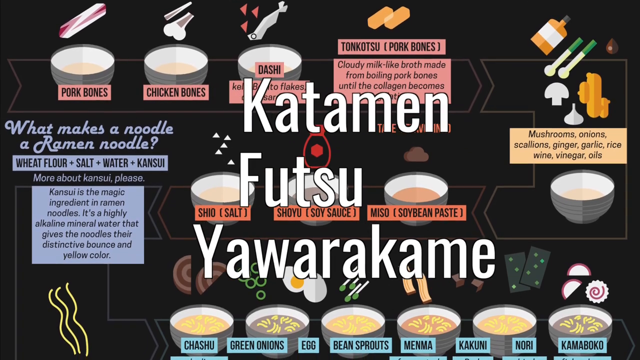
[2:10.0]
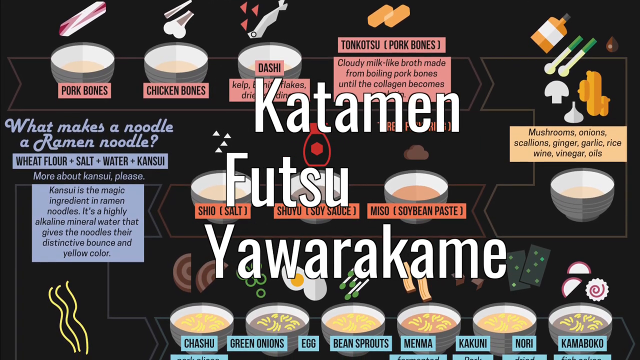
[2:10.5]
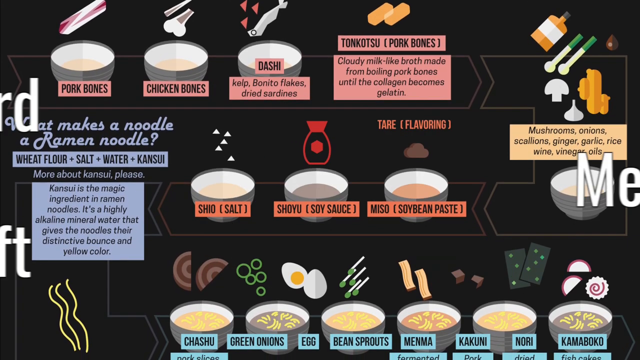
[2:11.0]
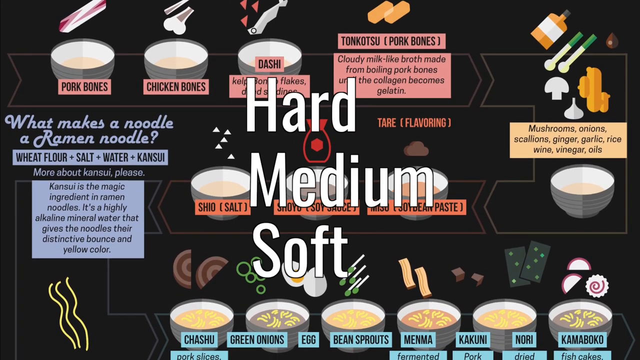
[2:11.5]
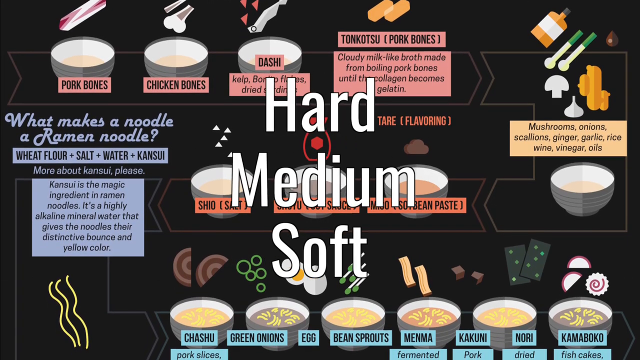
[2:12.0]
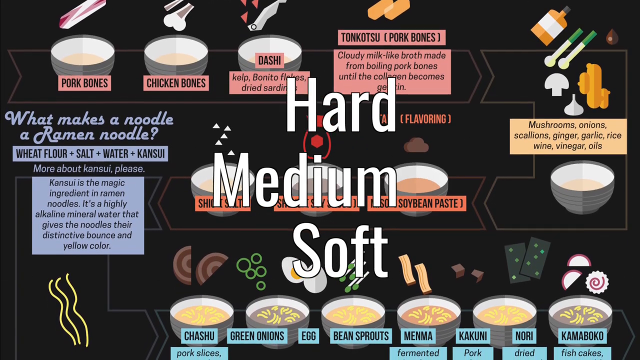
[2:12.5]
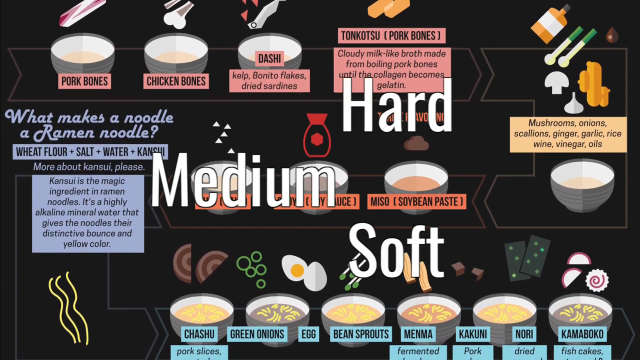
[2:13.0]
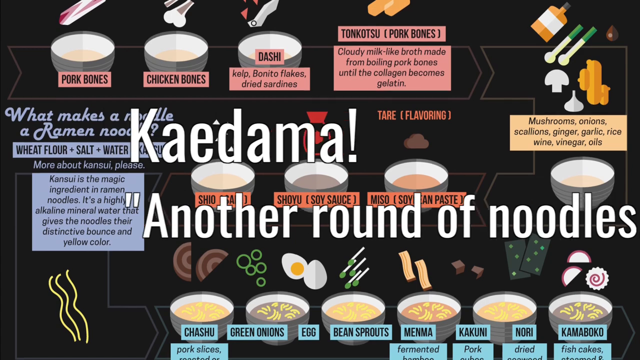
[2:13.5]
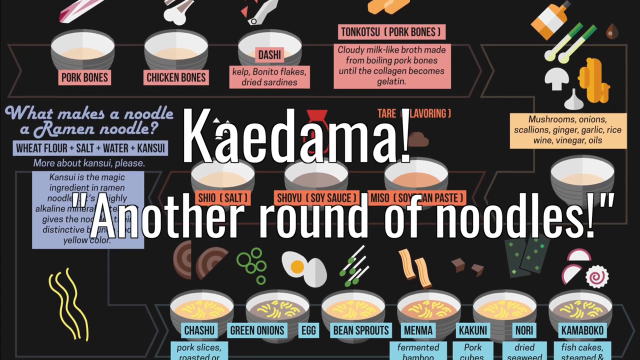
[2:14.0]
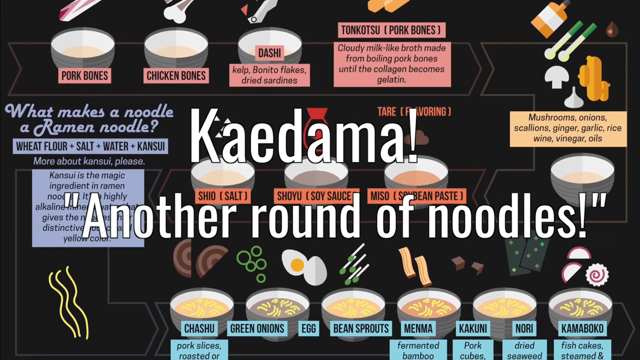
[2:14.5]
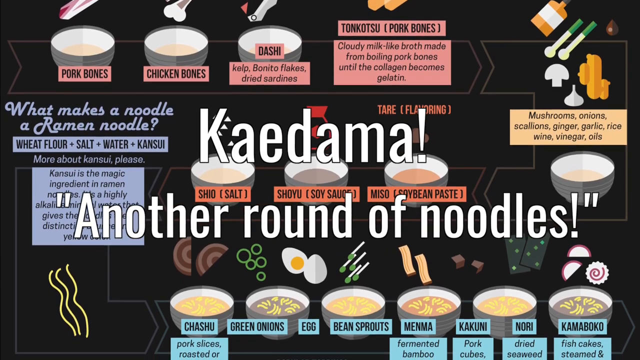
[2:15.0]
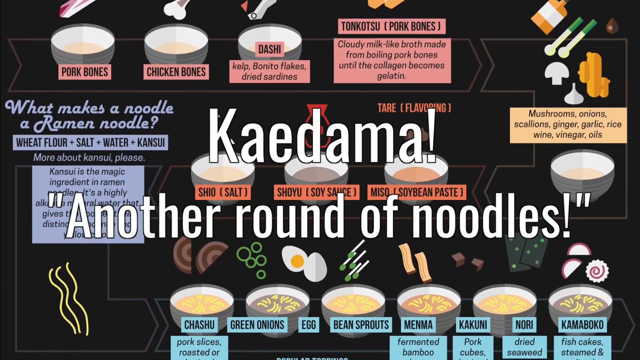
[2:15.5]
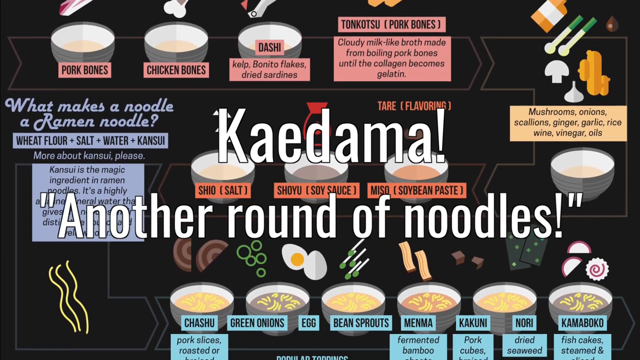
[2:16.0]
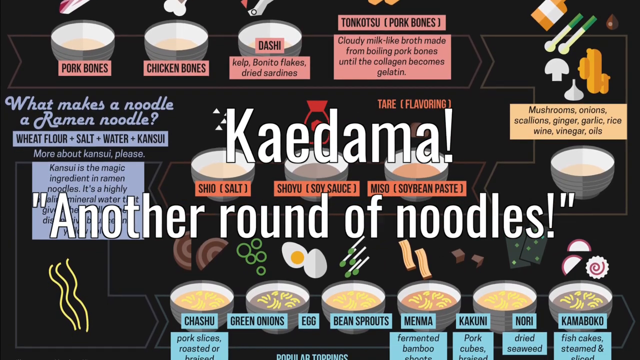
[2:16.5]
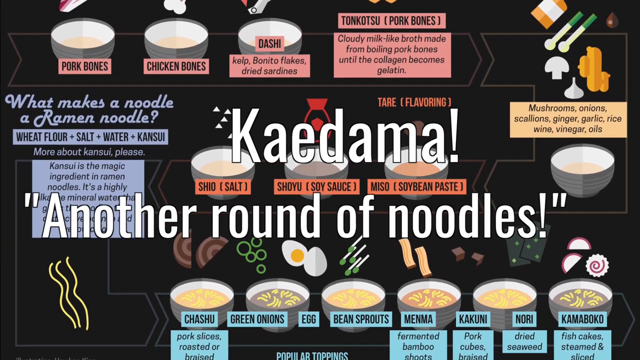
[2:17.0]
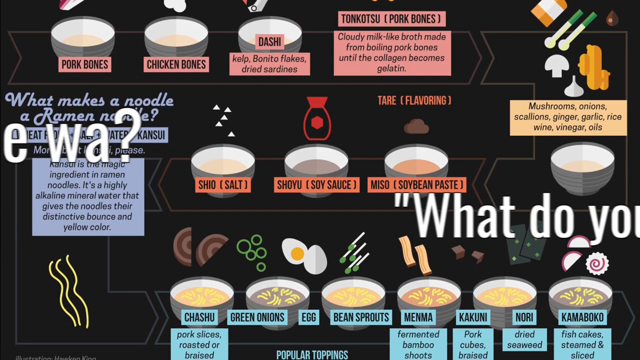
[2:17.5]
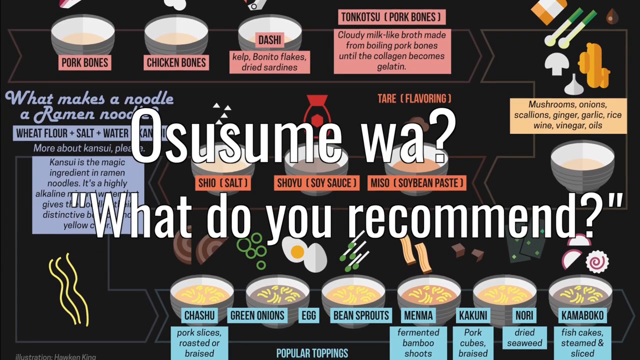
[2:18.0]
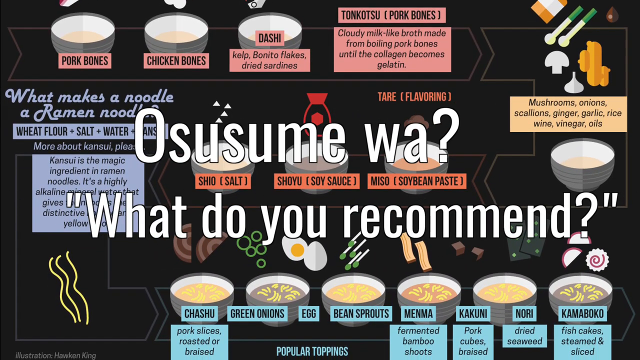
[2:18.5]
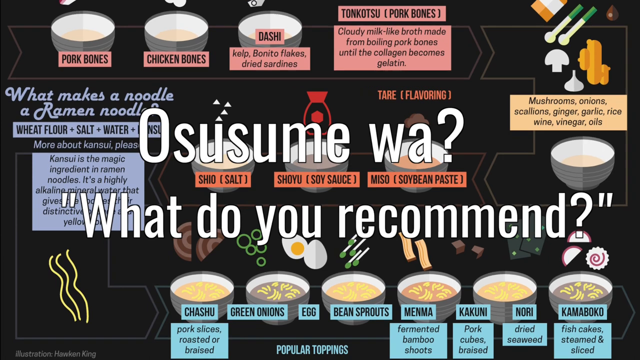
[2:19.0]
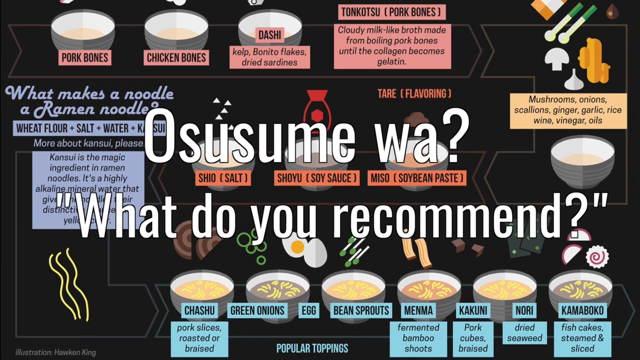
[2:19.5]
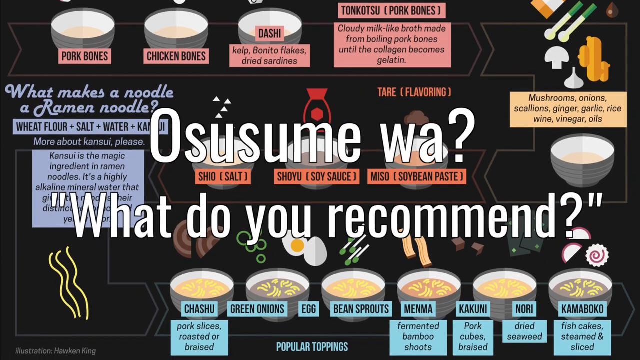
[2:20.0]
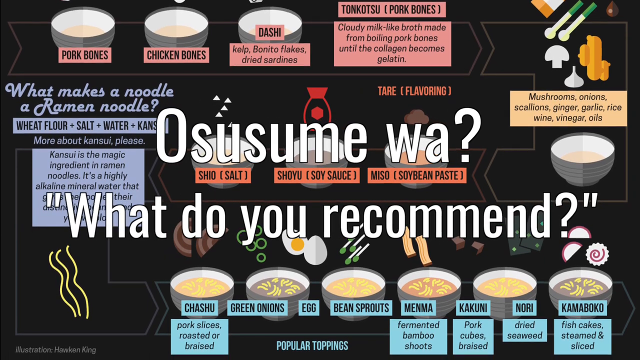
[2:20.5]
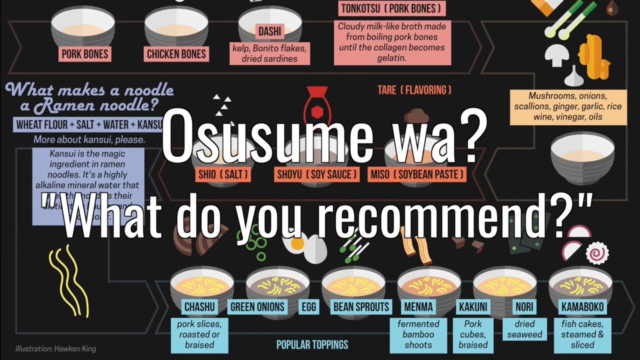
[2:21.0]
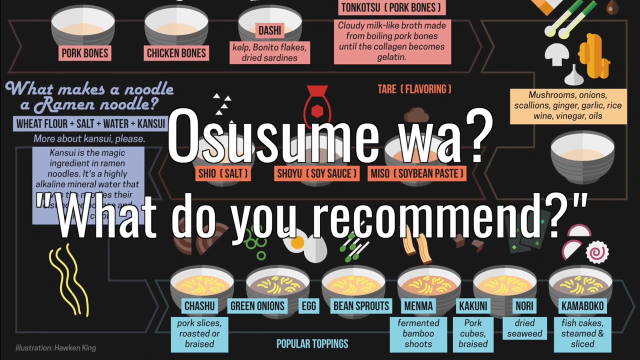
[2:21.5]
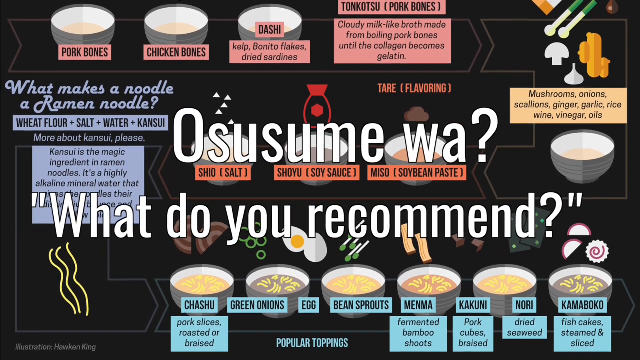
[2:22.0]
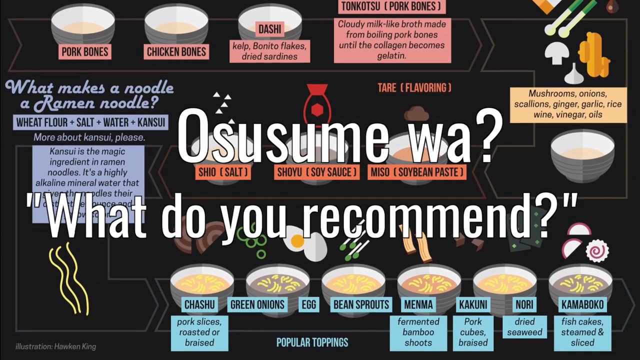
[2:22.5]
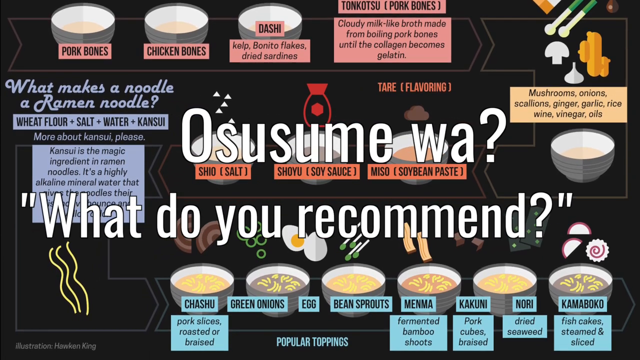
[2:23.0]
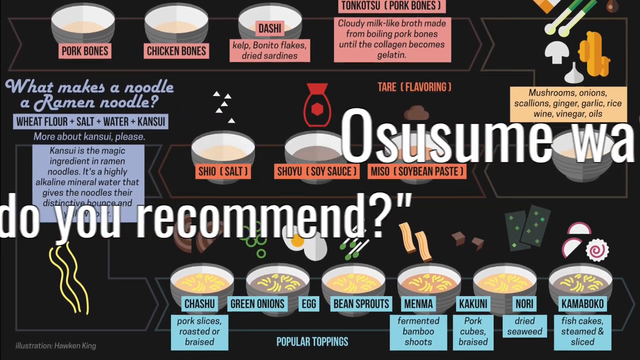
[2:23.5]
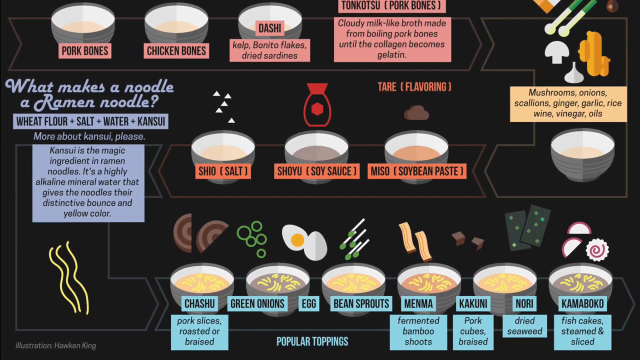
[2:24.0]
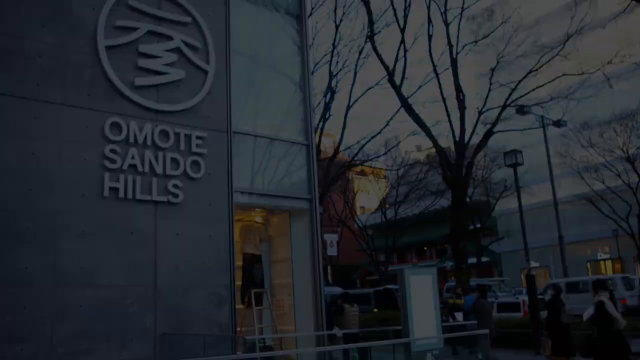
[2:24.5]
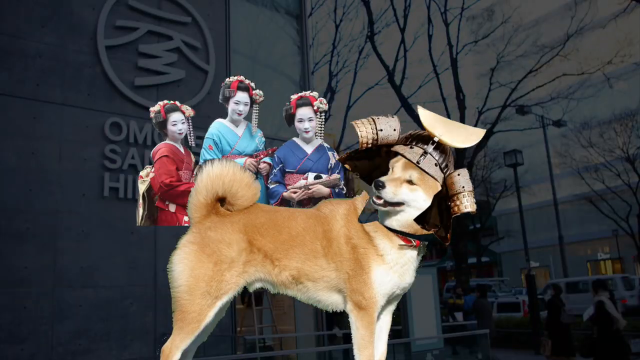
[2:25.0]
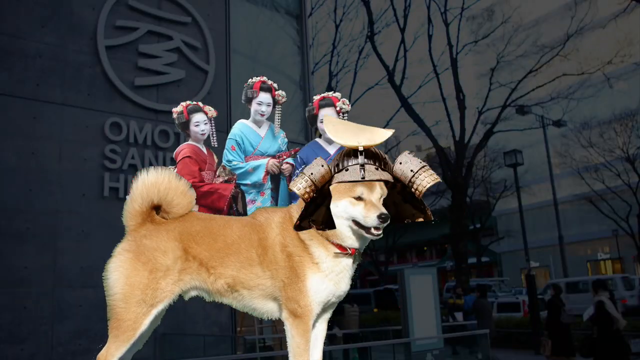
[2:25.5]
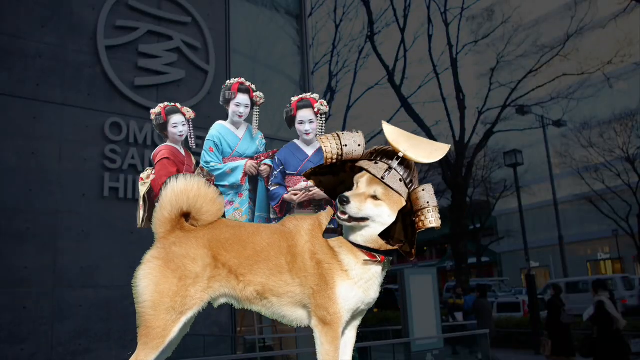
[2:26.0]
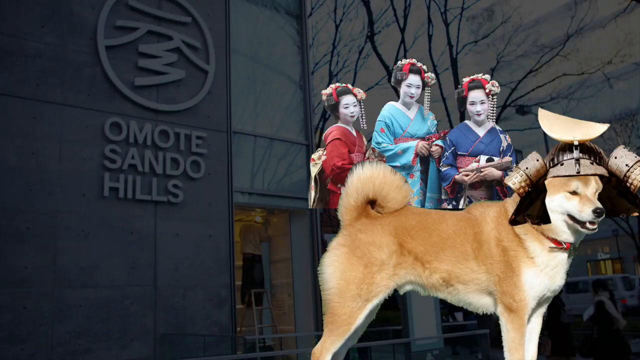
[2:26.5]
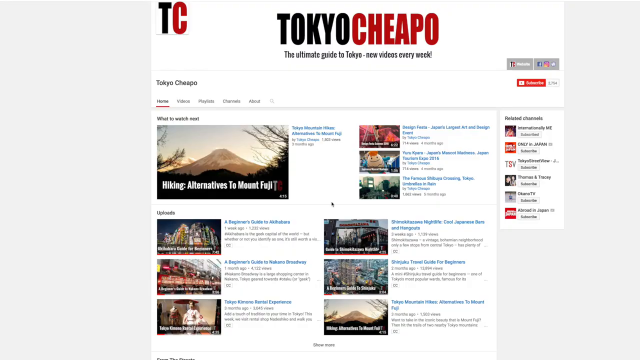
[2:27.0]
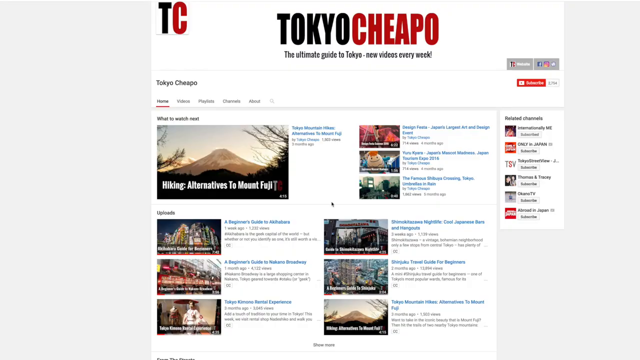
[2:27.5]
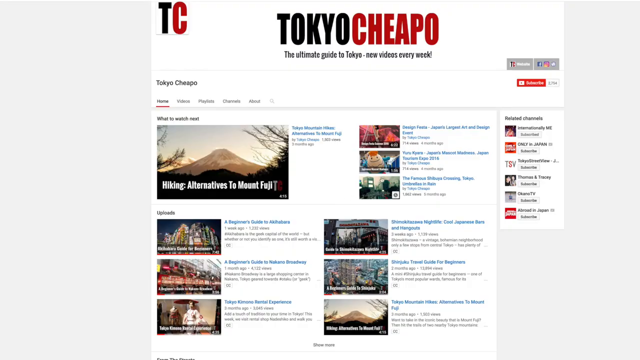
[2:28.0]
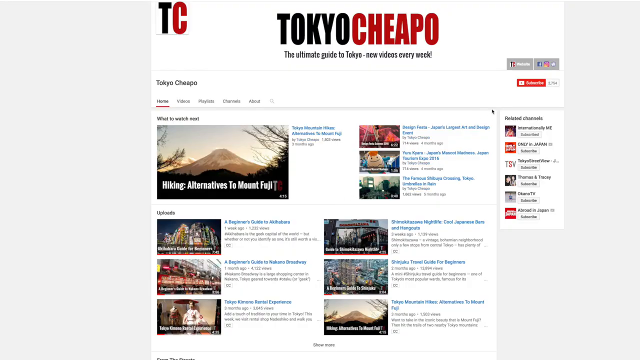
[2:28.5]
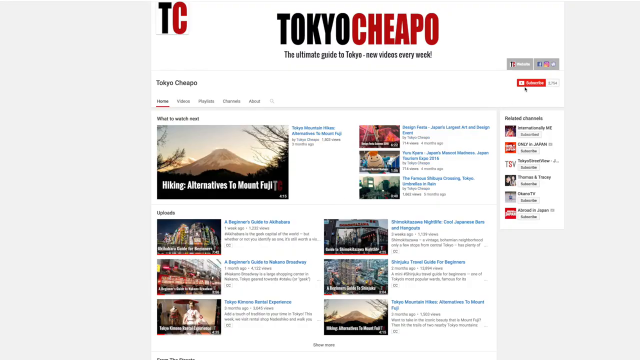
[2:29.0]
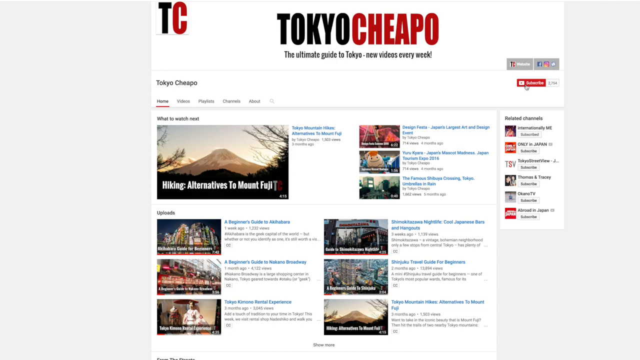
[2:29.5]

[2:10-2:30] The screen shows "hard, medium and soft," then "kaedama," another round of noodles, a translation of a useful phrase used to order ramen. The black background behind it has lots of different types of ramen ingredients, additions and flavours. Next comes "Osusume-wa," what do you recommend? An image shows a shiba inu dog wearing a samurai hat, with three traditional Japanese women riding on top of the dog, and an image of a shop in the background. The final screen is the TokyoCheapo channel page on YouTube, with a white background and lots of varied videos. It says "subscribe" and shows videos such as "Hiking alternatives to Mt Fuji," Facebook and Instagram links, a TC TokyoCheapo channel banner reading "The ultimate guide to Tokyo - New videos every week," and videos about food, ramen, how to order, and Japanese customs.